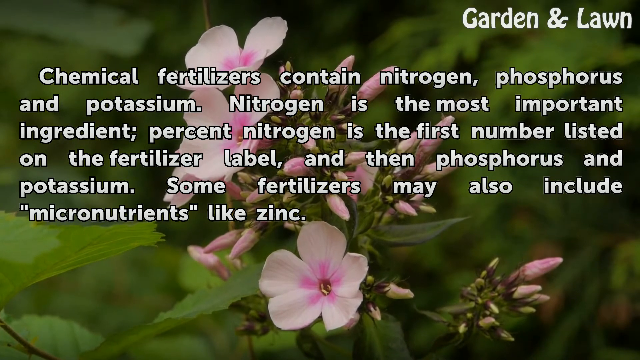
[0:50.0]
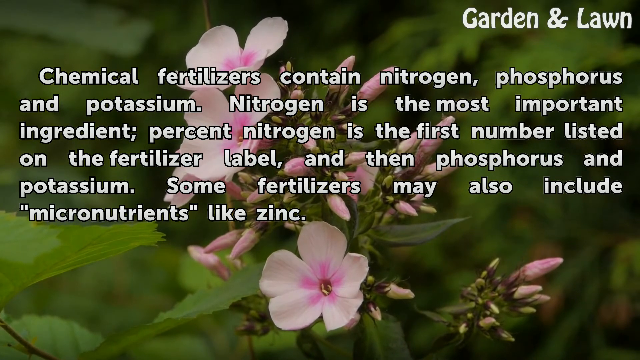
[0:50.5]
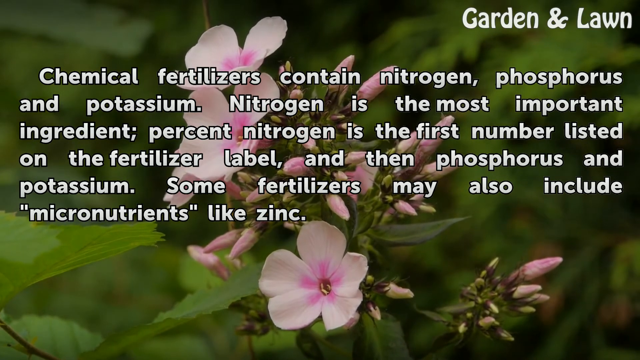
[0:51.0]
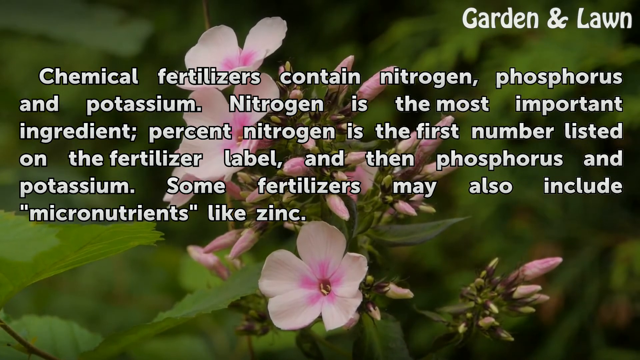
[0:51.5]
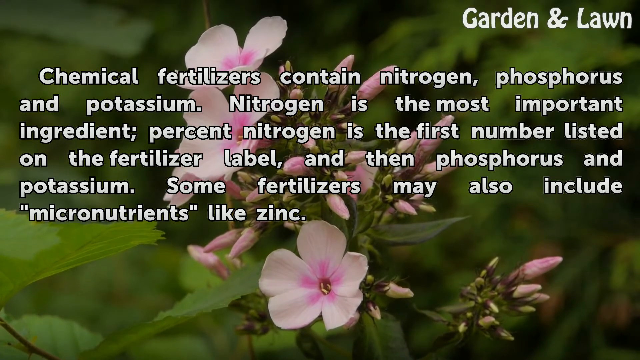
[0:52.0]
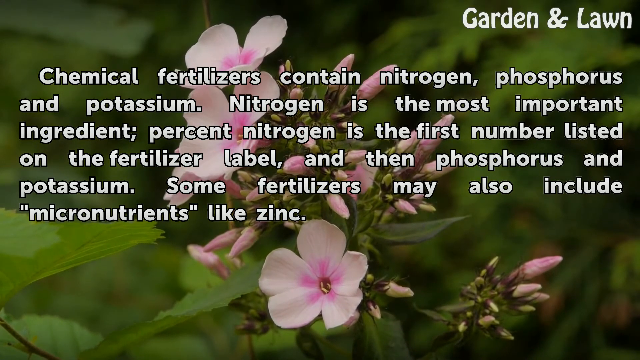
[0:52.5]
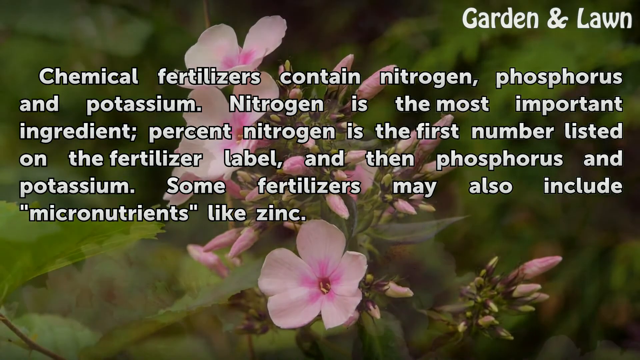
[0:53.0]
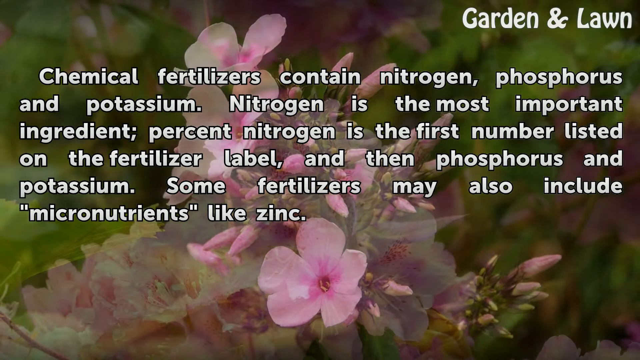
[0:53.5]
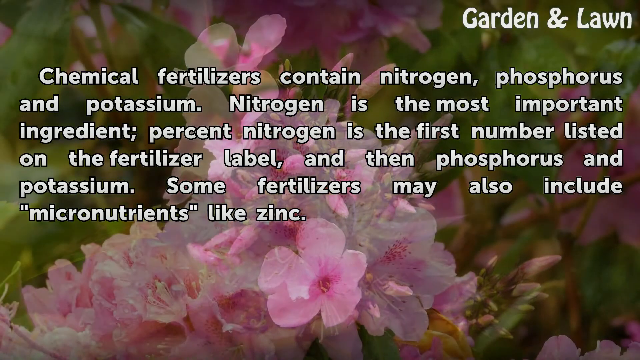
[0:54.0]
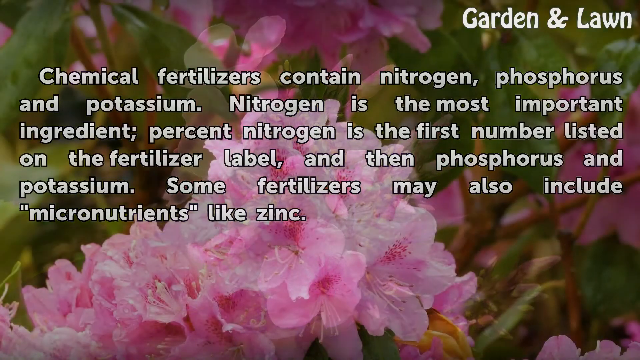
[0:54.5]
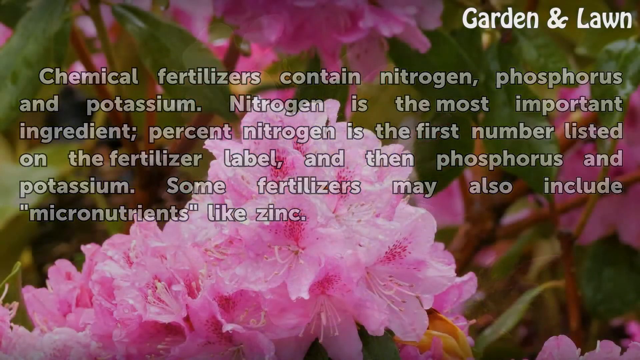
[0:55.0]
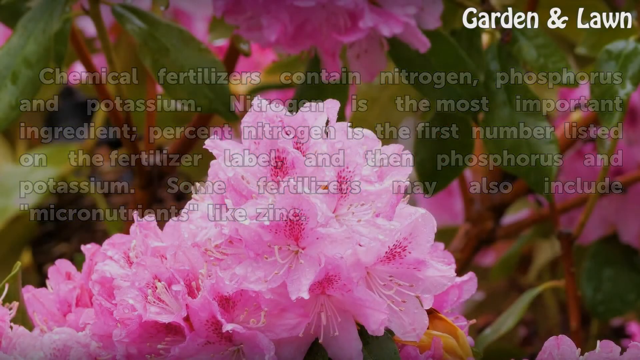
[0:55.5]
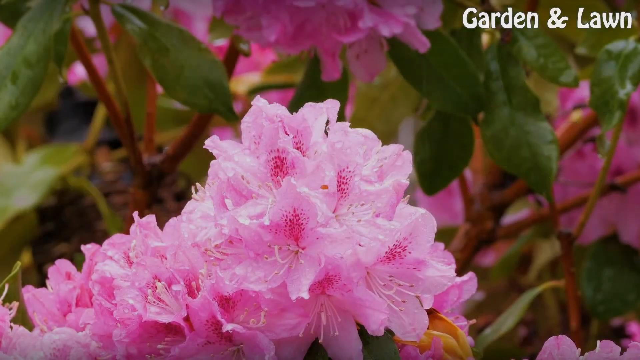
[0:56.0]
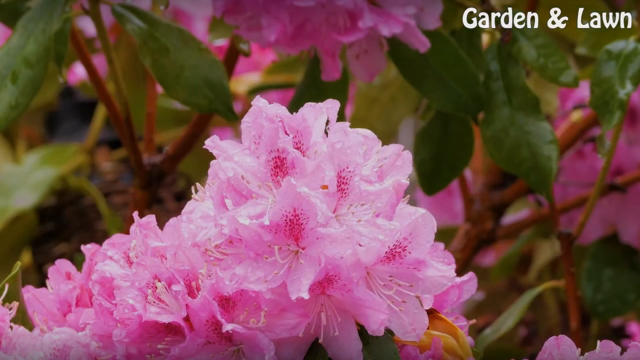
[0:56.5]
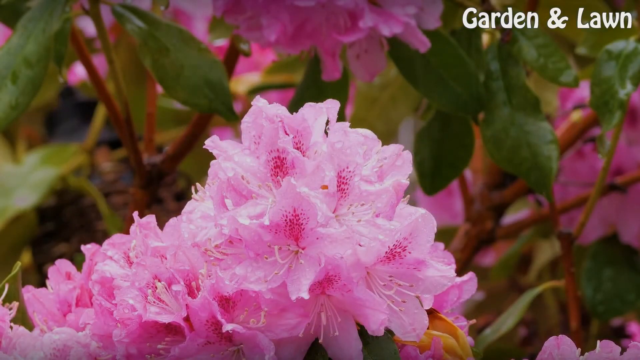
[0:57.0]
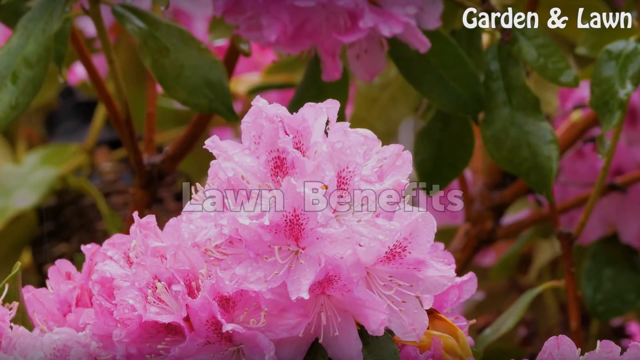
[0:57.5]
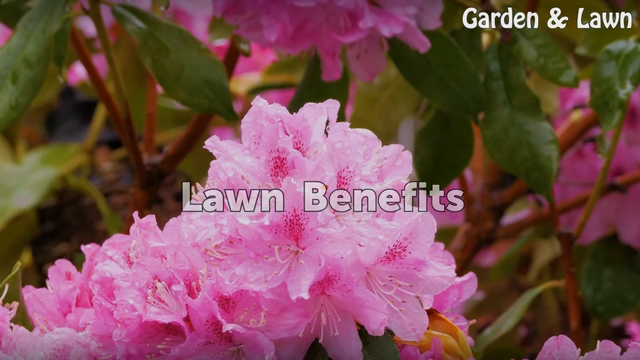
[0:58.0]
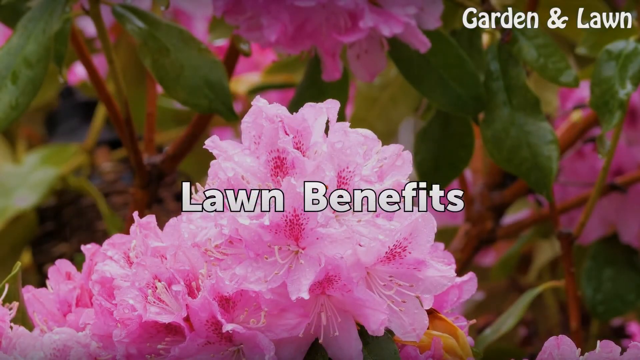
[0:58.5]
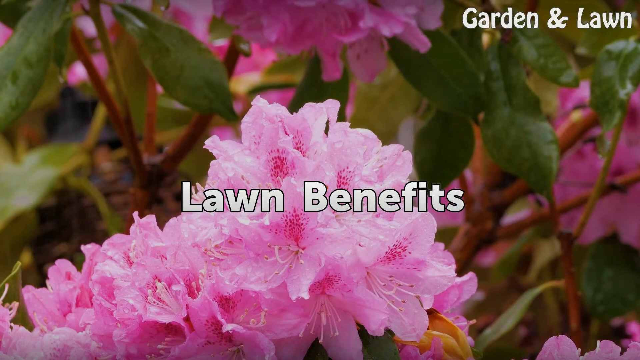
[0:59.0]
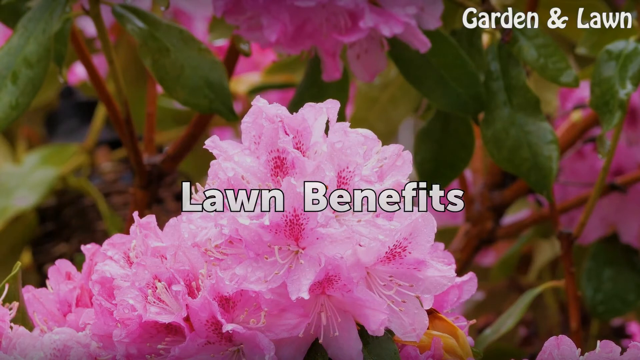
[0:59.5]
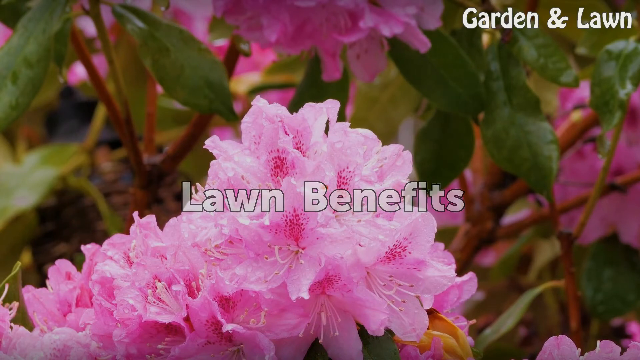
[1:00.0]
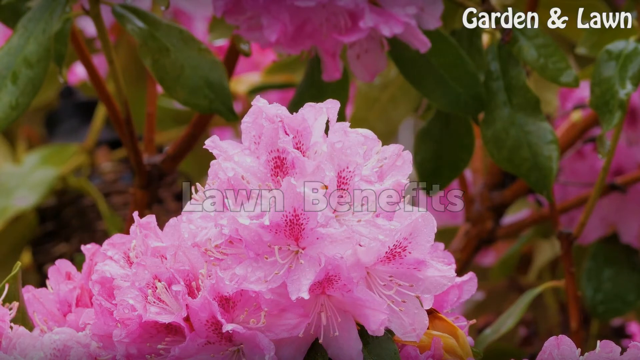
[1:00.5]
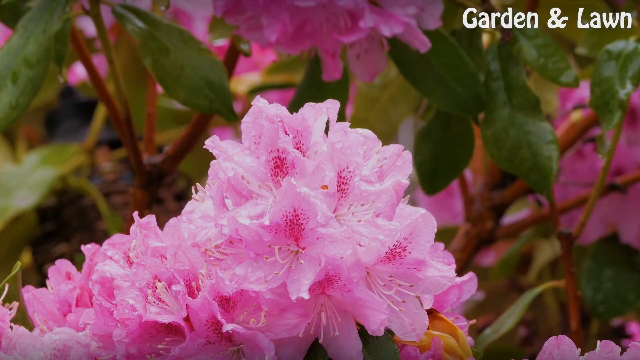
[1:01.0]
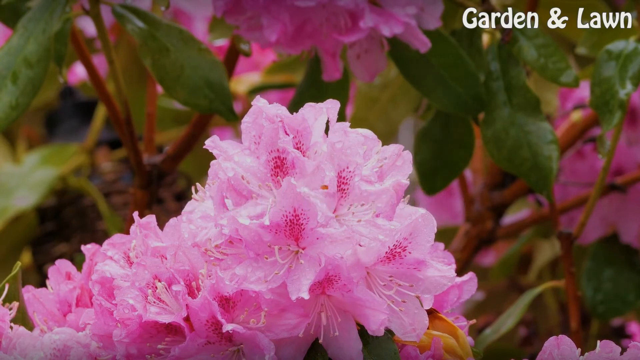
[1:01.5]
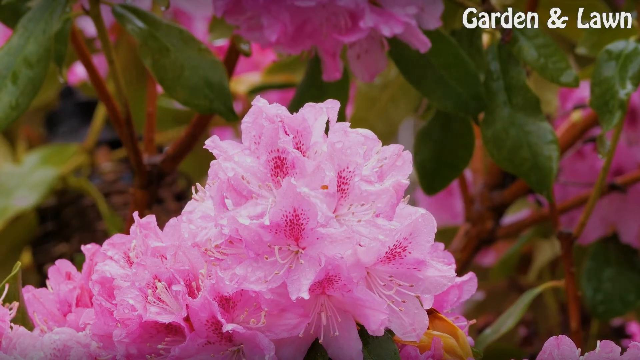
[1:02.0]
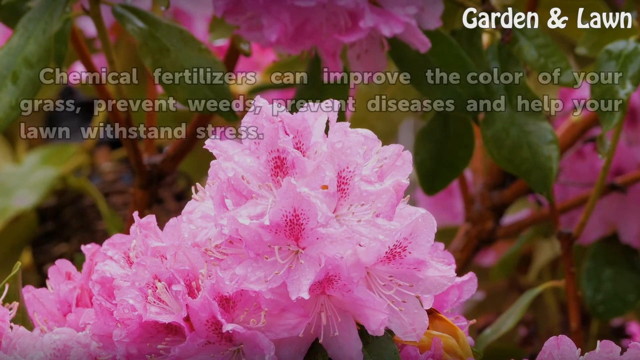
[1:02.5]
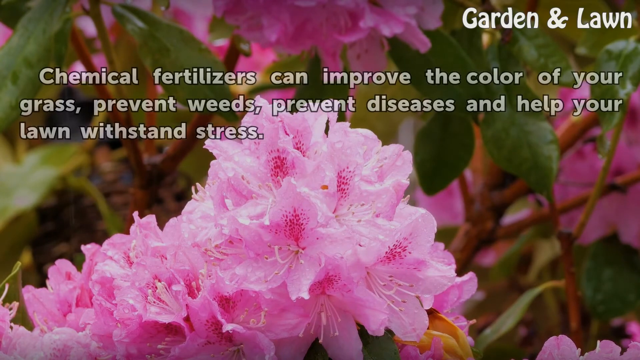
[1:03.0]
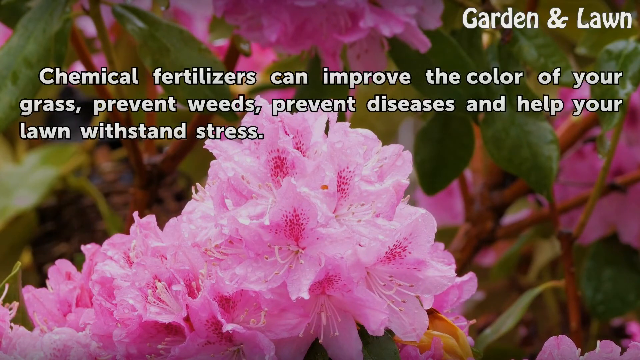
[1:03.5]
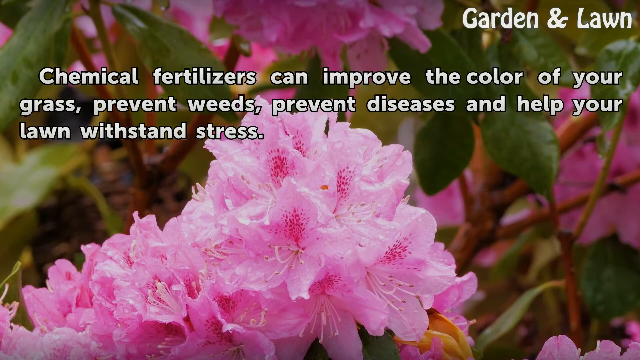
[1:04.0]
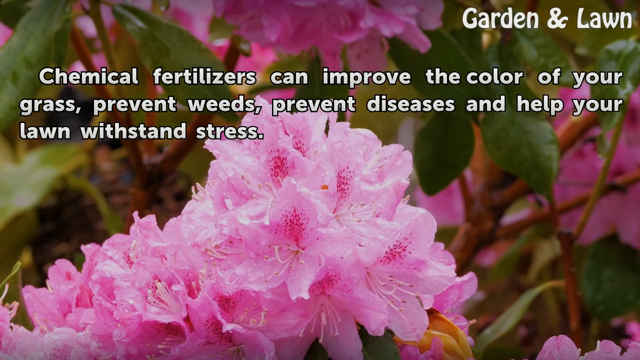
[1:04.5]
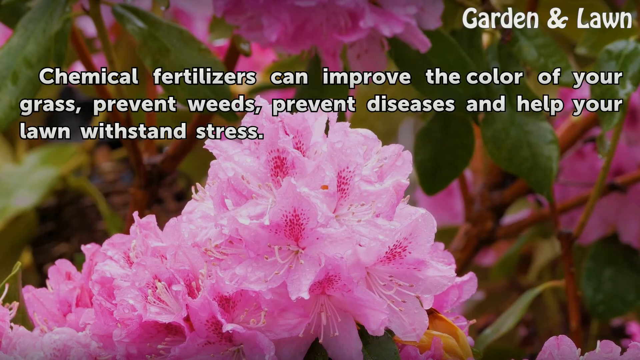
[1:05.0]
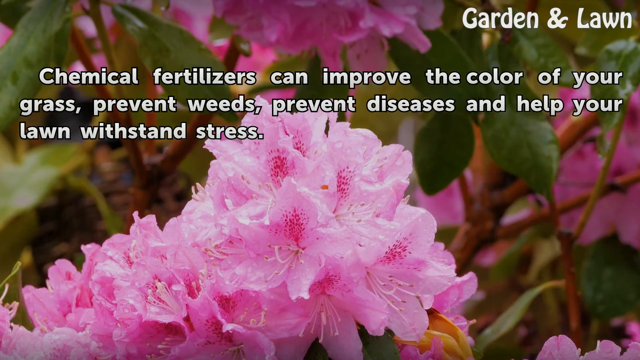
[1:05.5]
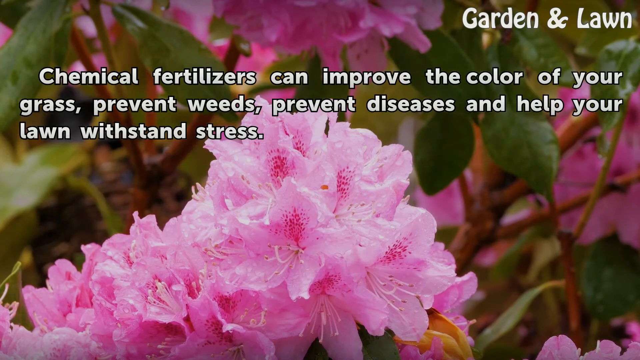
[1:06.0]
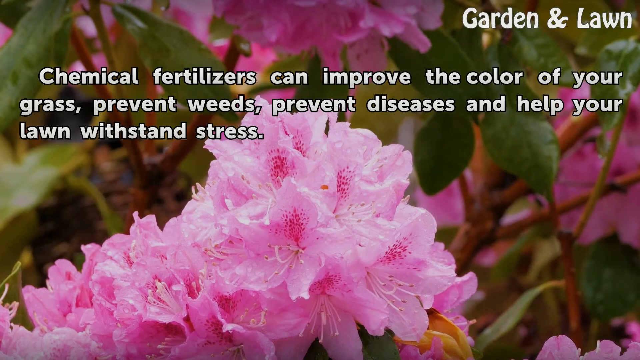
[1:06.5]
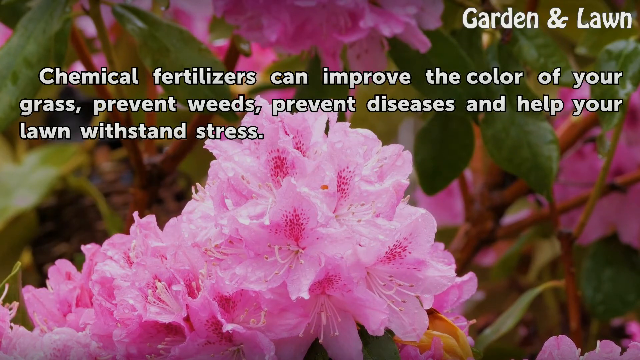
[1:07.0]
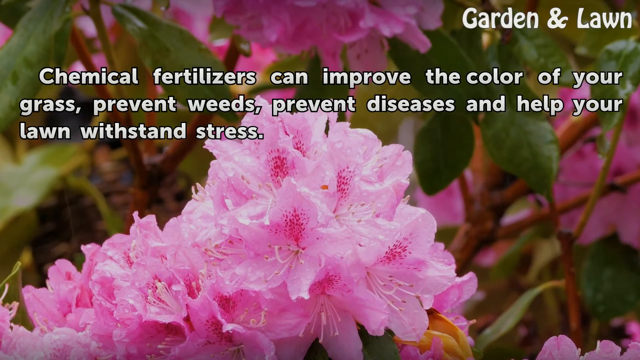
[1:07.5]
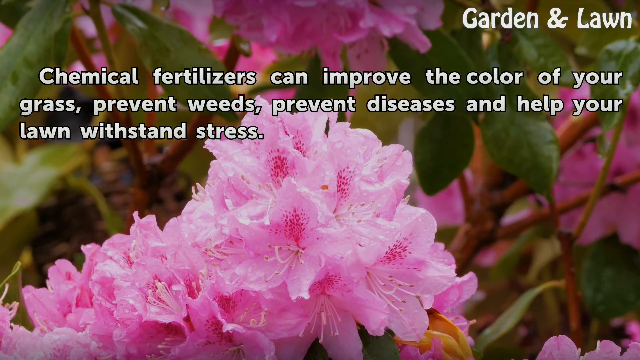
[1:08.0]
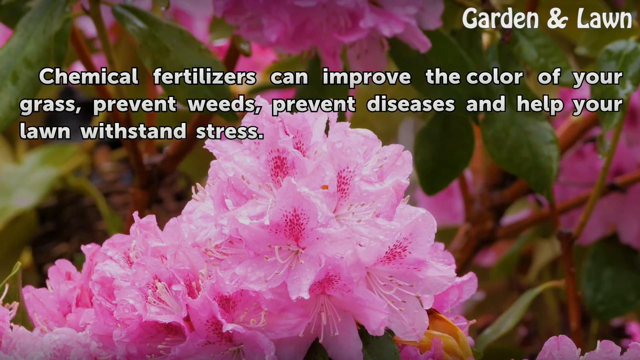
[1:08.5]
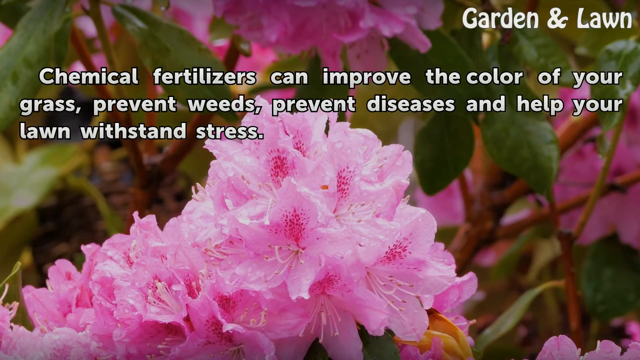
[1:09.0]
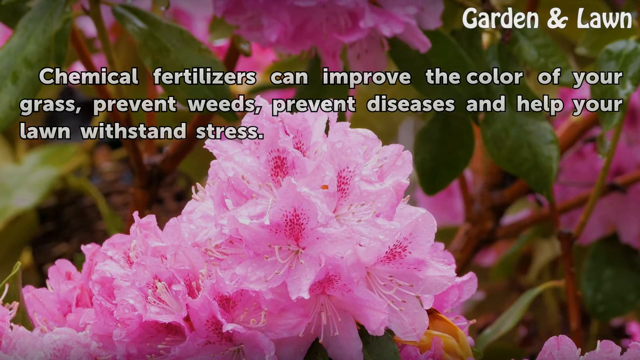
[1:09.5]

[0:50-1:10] The background changes to more pink flowers, with a large group of about 20 to 30 of them together in the bottom middle of the screen and green leaves, twigs and stems in the background. Text in the centre of the screen reads "lawn benefits". More text then appears in the top middle of the screen reading "chemical fertilizers can improve the colour of your grass, prevent weeds, prevent diseases and help your lawn withstand stress."